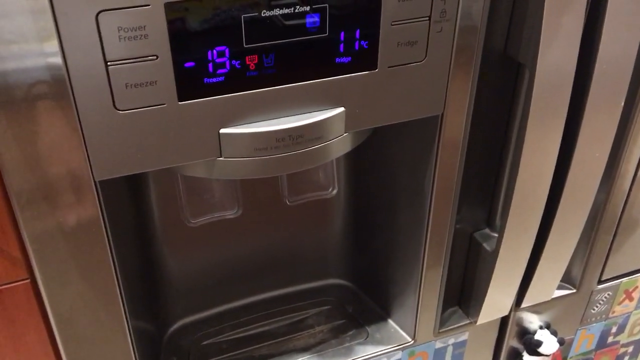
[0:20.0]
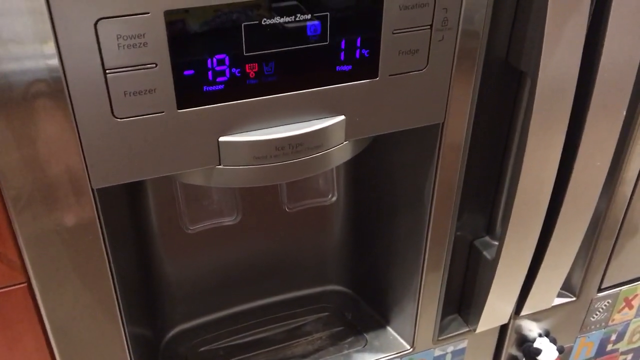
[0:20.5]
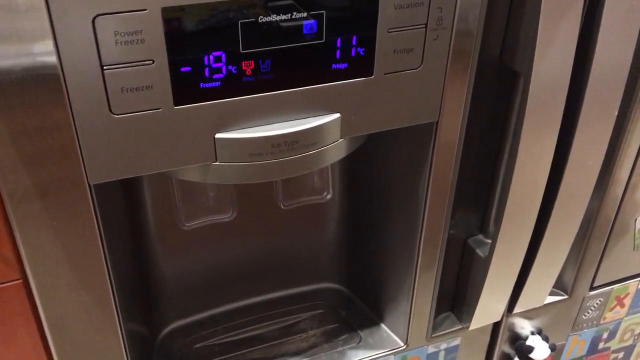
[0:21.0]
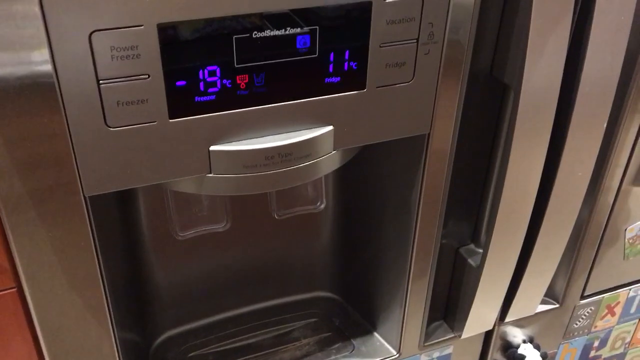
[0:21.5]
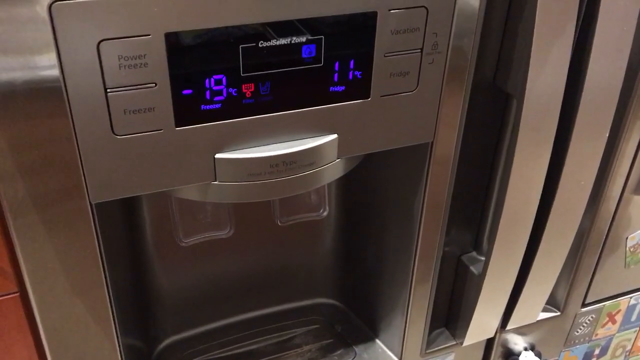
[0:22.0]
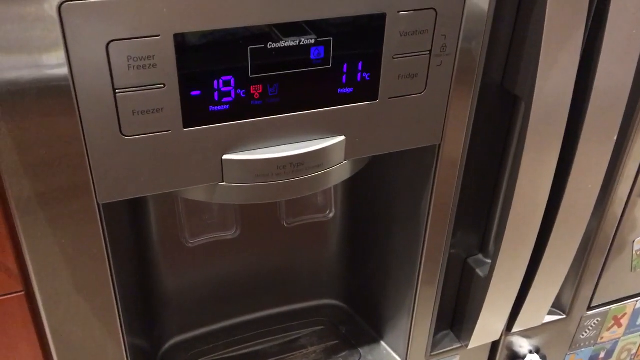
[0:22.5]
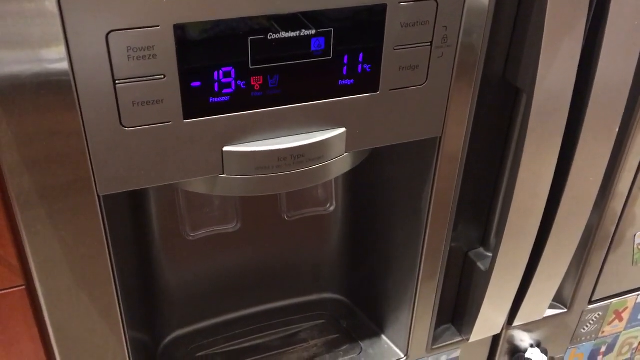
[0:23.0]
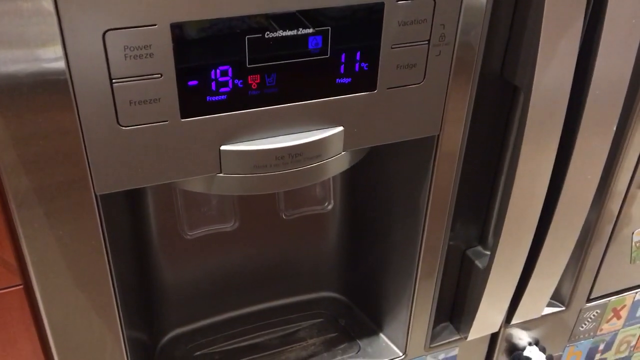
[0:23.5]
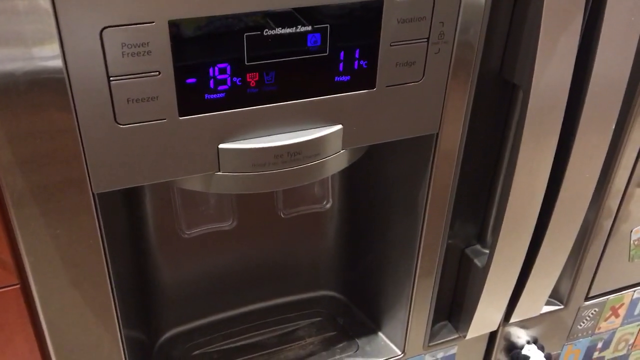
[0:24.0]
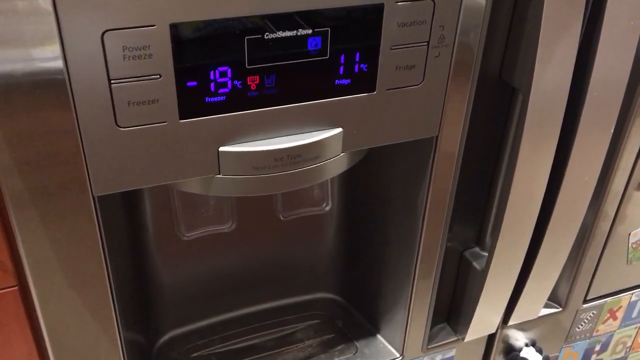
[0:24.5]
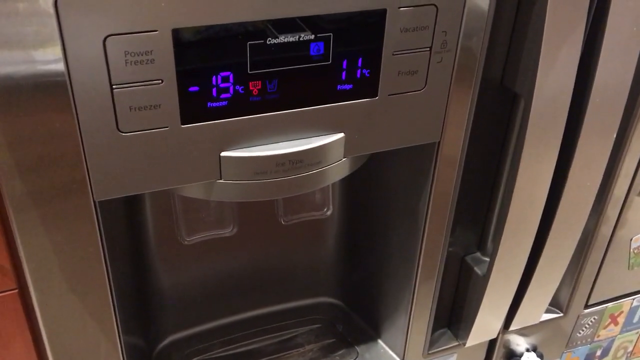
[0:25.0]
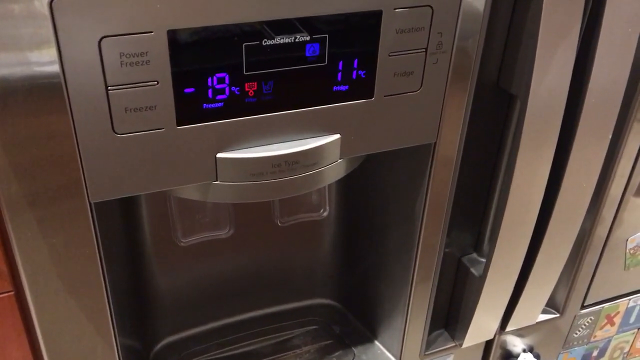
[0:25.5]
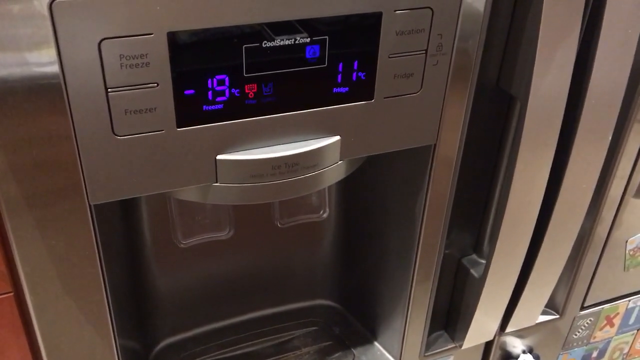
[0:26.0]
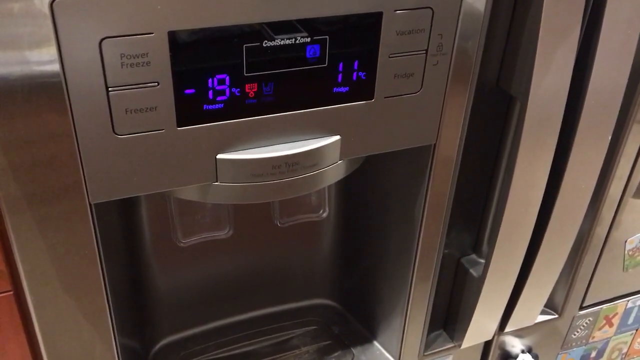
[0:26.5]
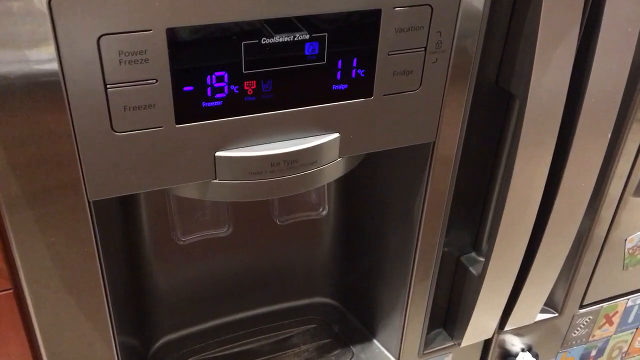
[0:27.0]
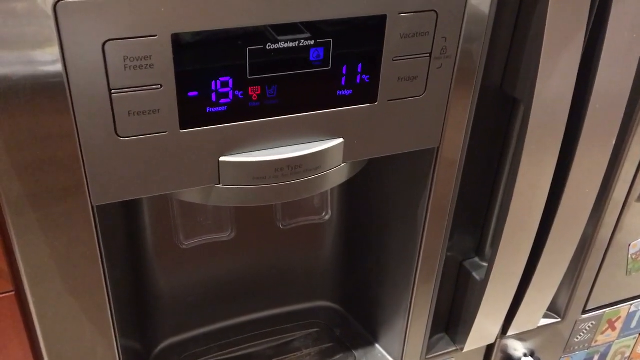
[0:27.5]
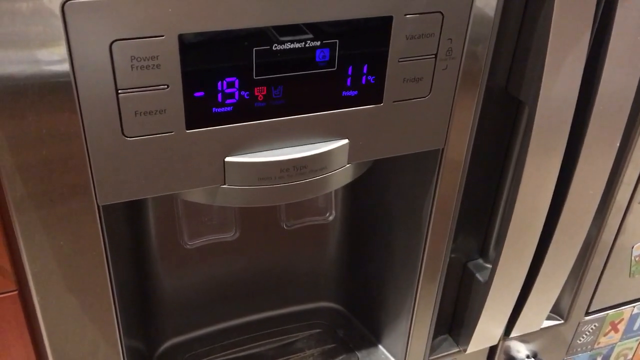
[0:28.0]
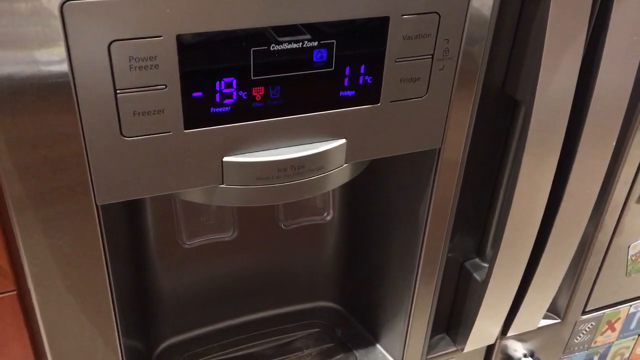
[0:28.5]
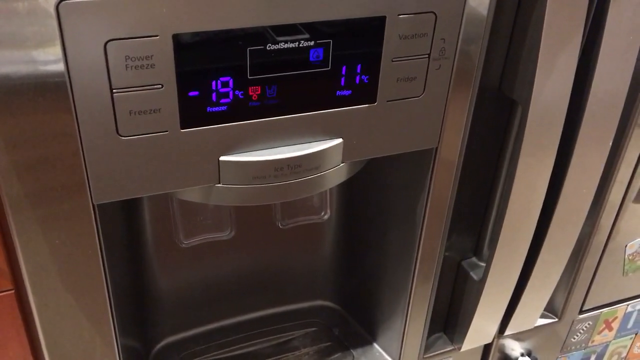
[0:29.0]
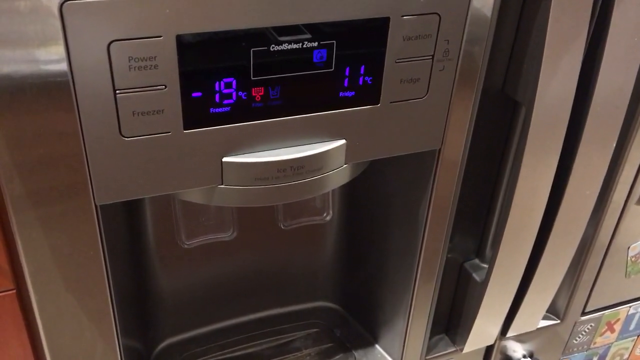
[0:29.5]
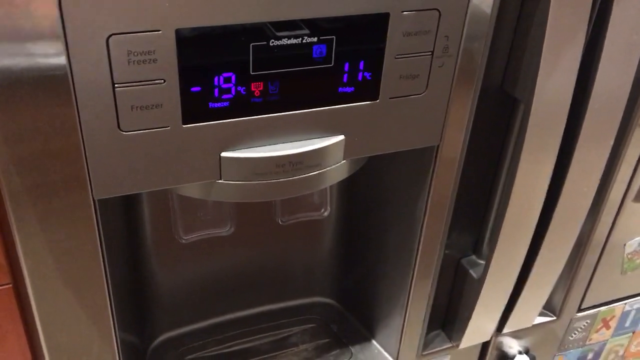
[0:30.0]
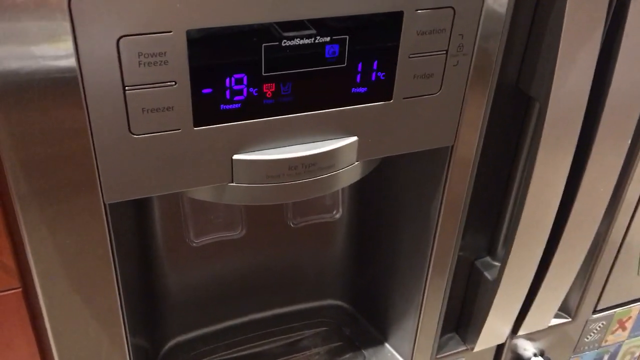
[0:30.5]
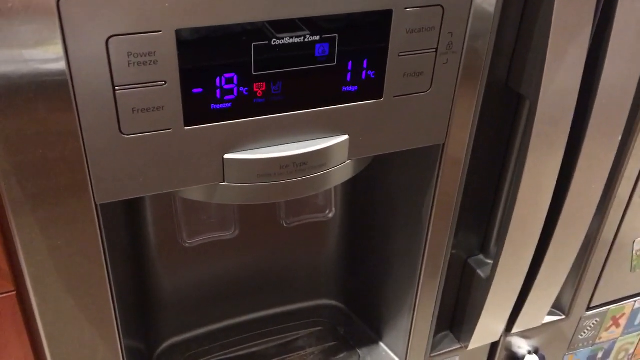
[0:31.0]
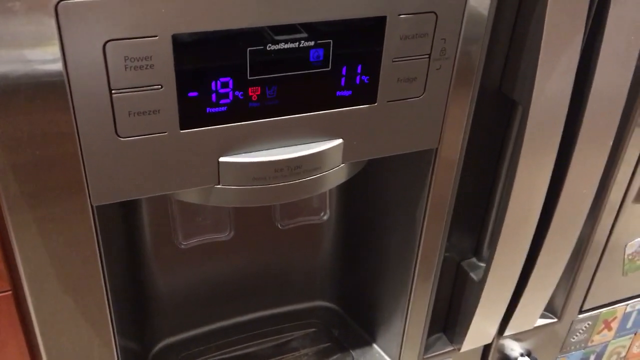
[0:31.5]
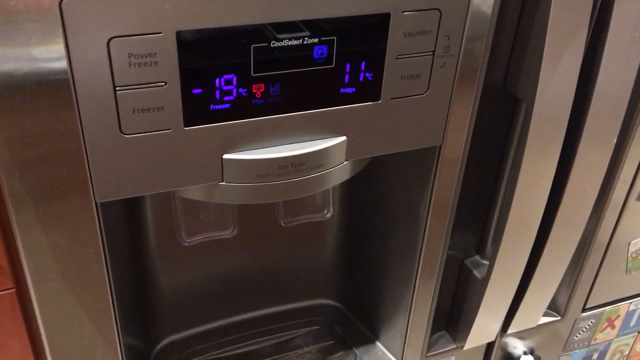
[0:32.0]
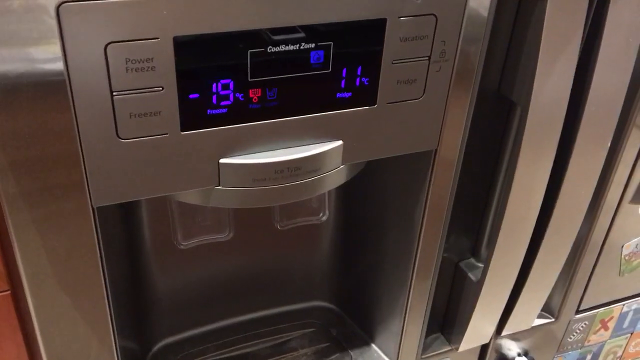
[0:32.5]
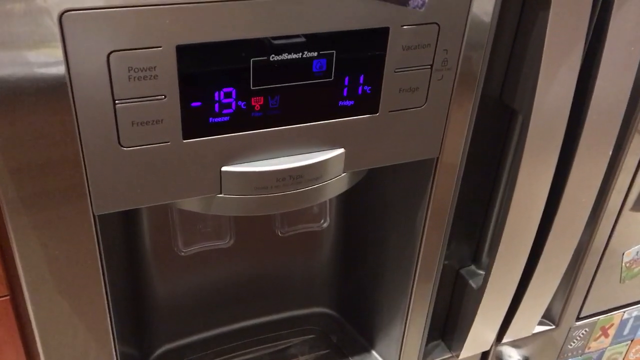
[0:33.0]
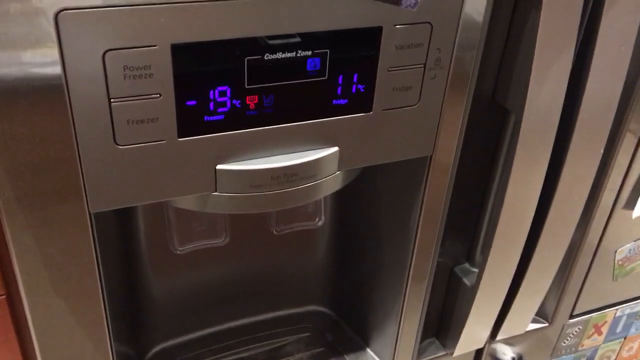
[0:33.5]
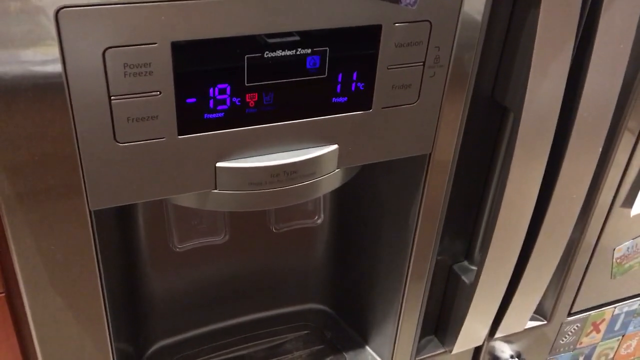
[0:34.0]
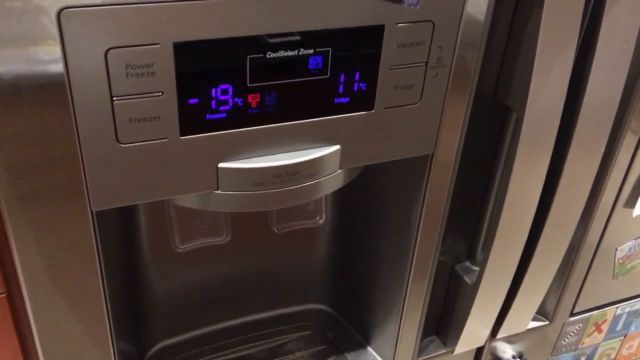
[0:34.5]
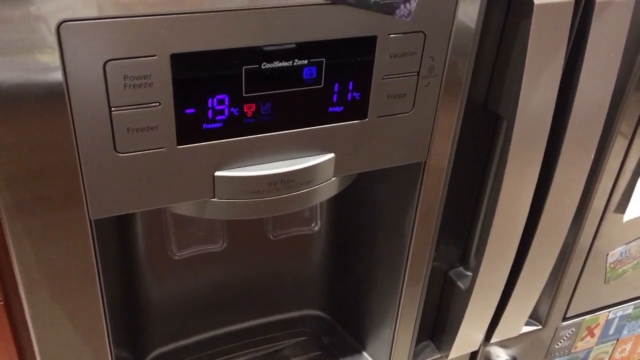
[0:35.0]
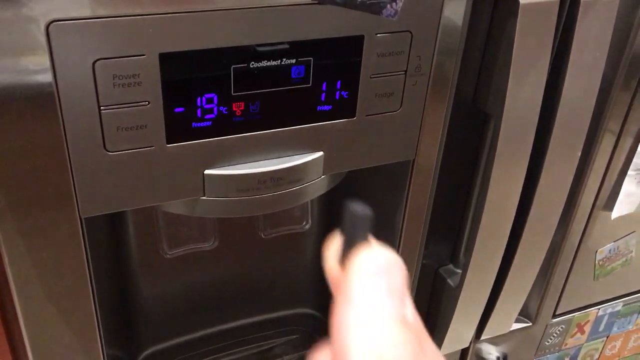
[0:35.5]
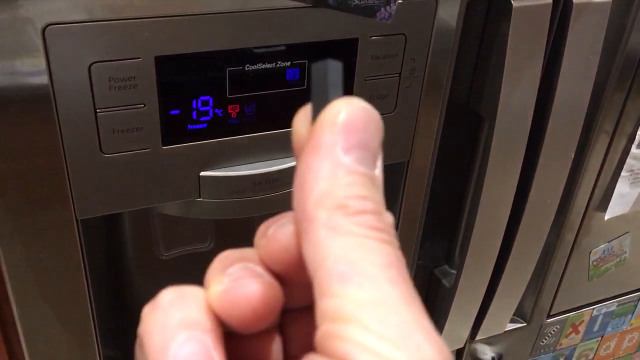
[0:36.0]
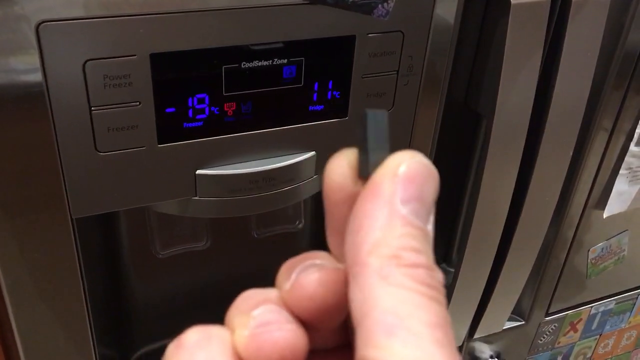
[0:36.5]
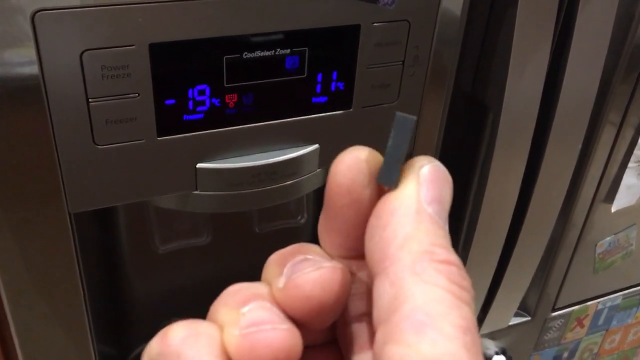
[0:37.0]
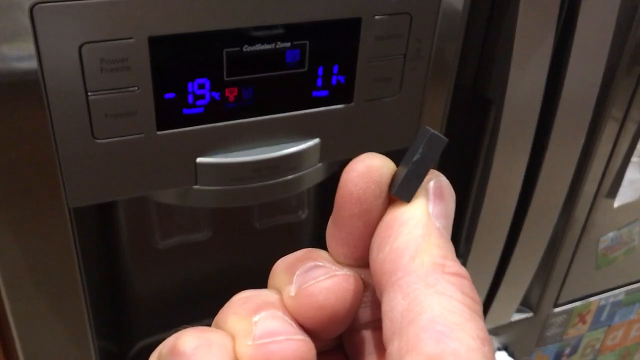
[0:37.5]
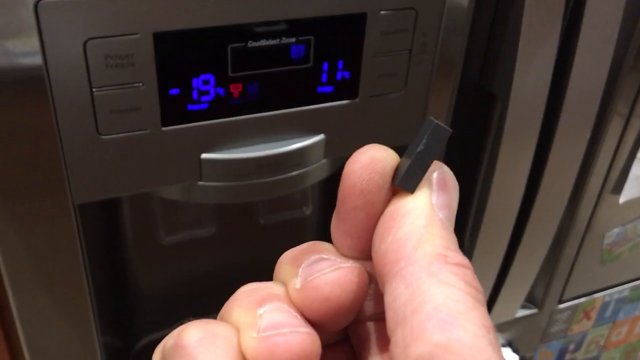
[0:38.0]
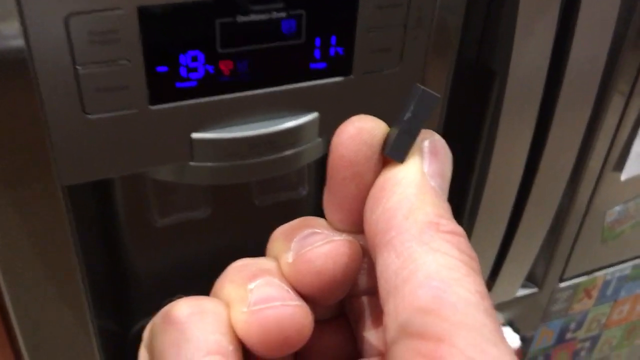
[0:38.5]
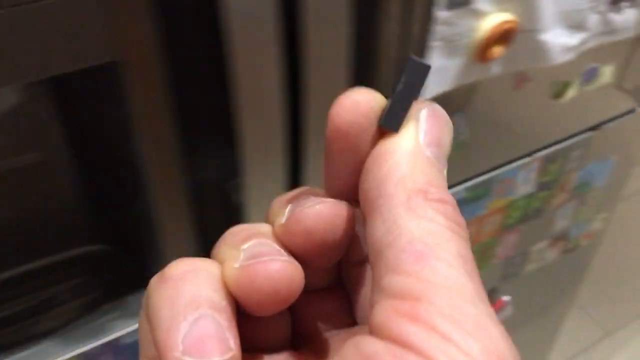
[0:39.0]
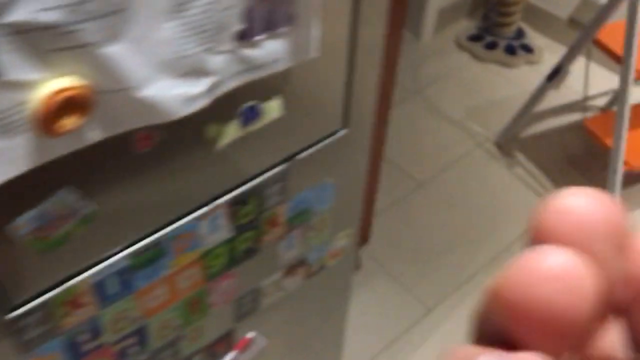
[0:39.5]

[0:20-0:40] In a slightly wide frame, the outside of a stainless steel refrigerator is shown, mainly its left-hand side. It has two double doors, with the handles just on the right-hand edge. The ice maker is set in the center of the screen. It has several buttons: "power freeze" in the upper left and "freezer" in the lower left, while the ones on the right cannot be read. It has a display with blue lighting. Below are two outputs, probably one for ice and one for water, though their labels cannot be read either. The person brings up their right hand holding a very small object that looks almost like a black rectangle, roughly the size of two thumbnails combined. They then turn to the right and begin walking away from the area with the refrigerator. The person is Caucasian, and only their hand is visible.